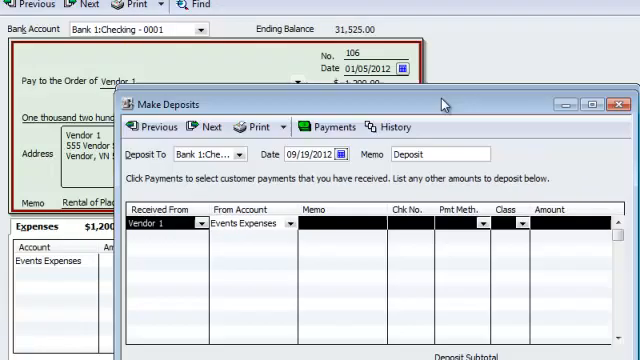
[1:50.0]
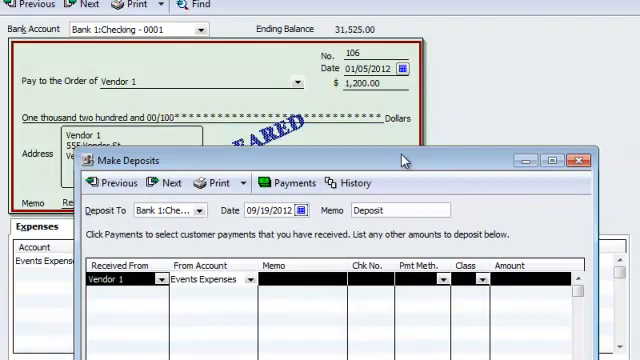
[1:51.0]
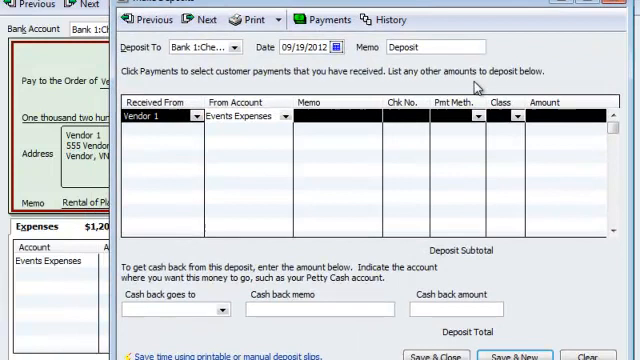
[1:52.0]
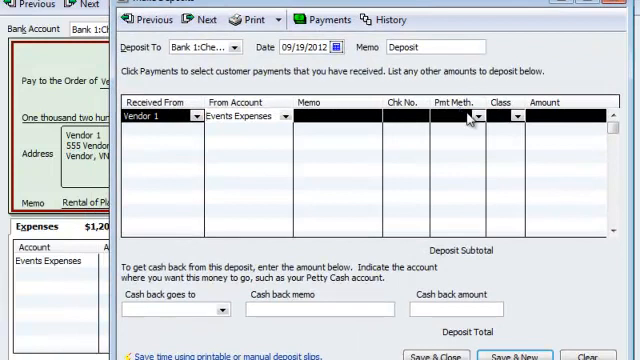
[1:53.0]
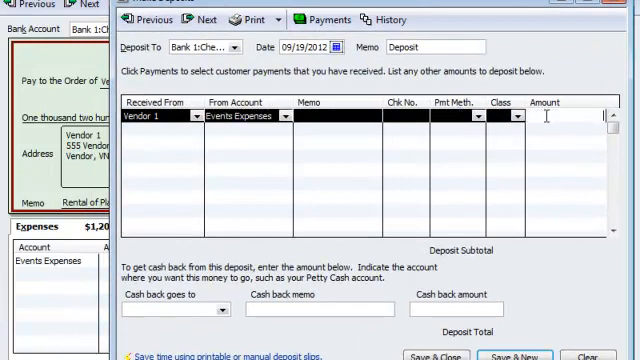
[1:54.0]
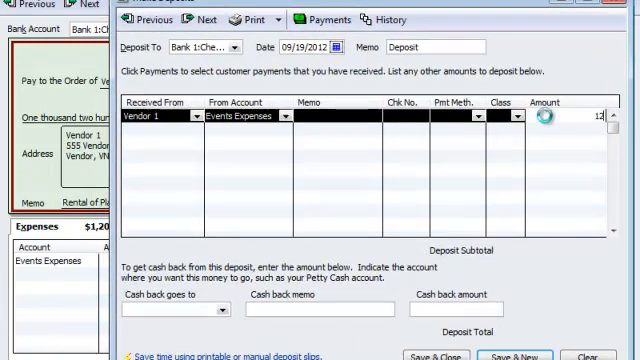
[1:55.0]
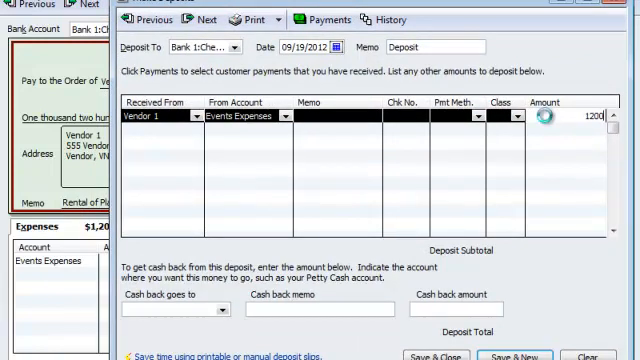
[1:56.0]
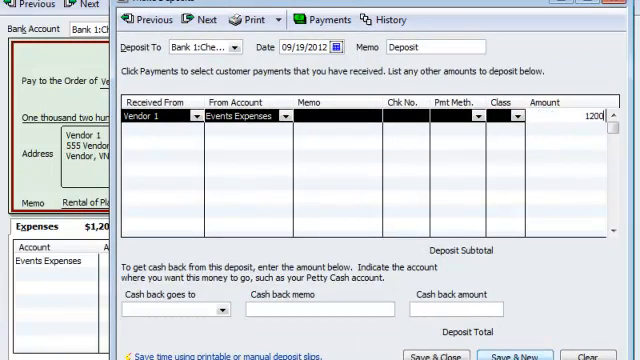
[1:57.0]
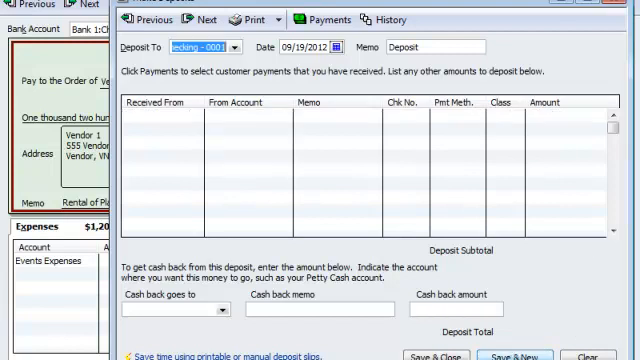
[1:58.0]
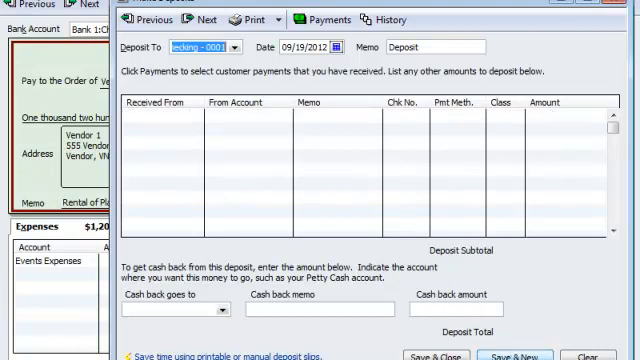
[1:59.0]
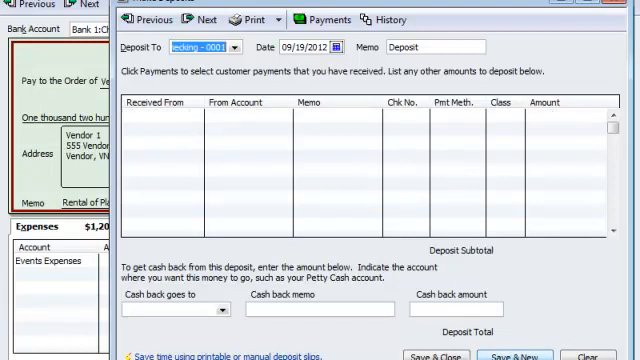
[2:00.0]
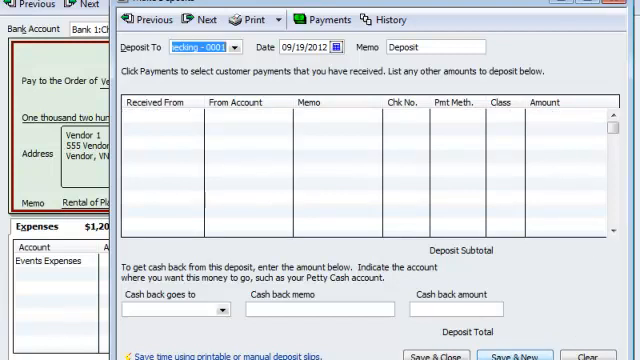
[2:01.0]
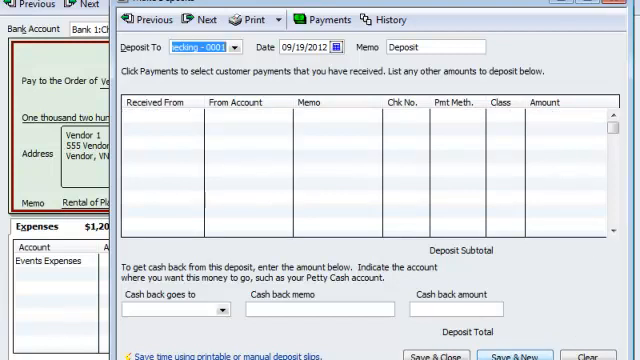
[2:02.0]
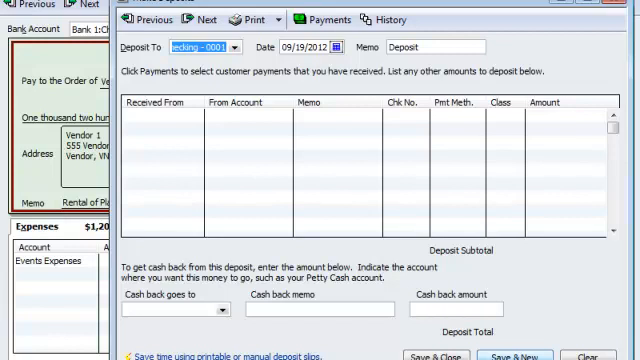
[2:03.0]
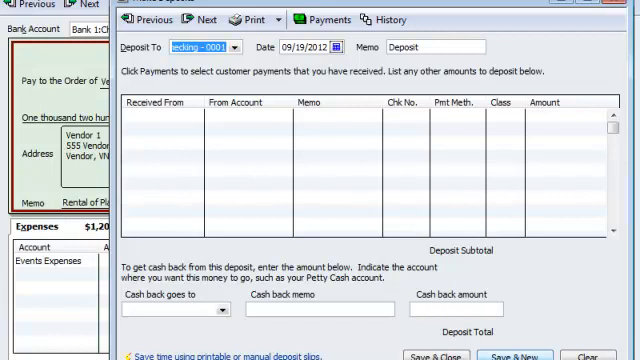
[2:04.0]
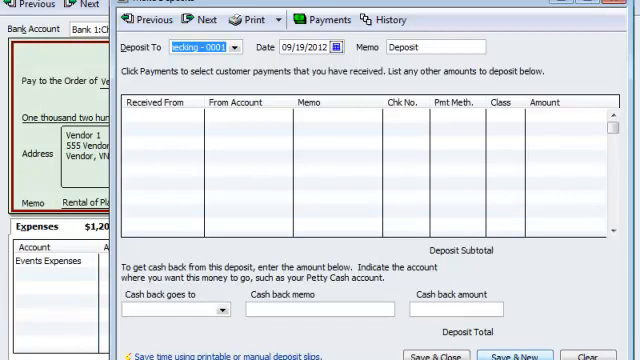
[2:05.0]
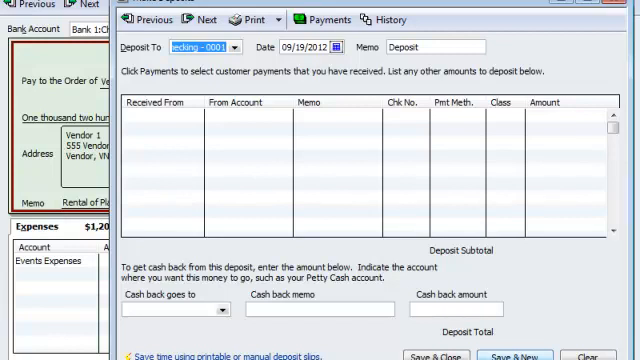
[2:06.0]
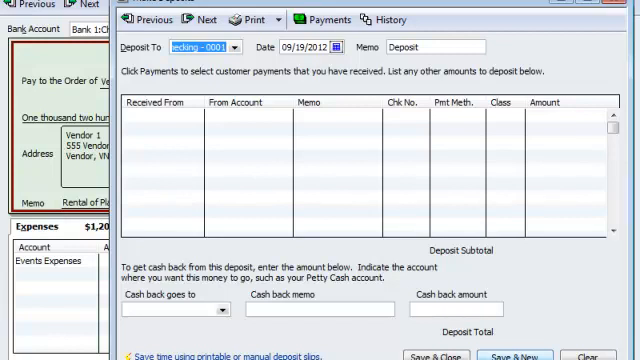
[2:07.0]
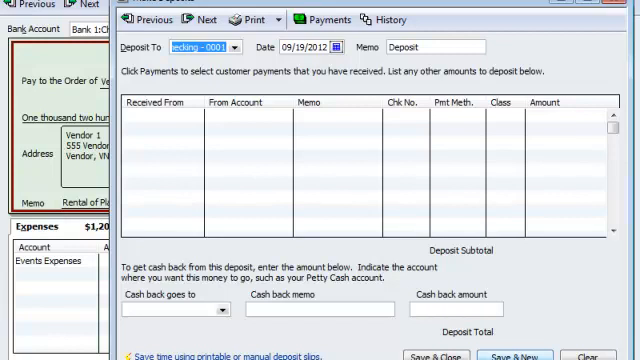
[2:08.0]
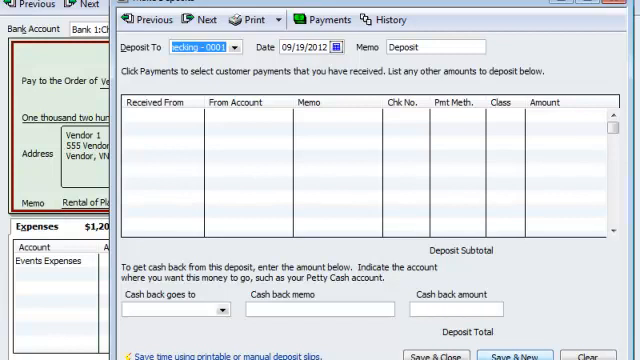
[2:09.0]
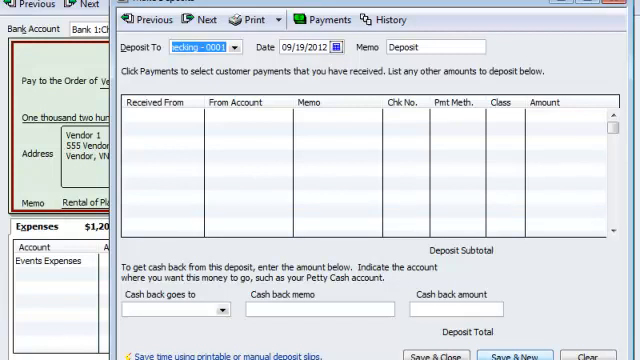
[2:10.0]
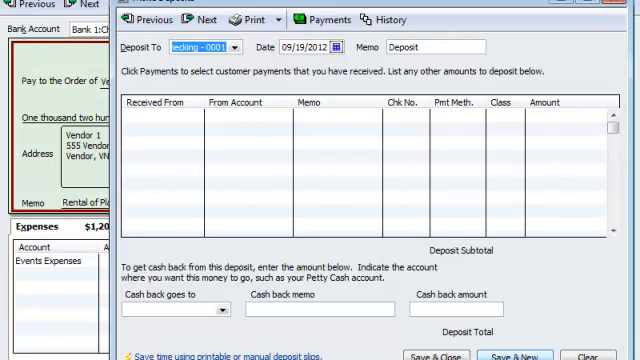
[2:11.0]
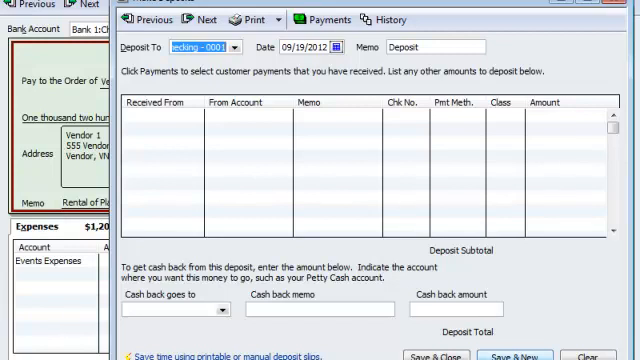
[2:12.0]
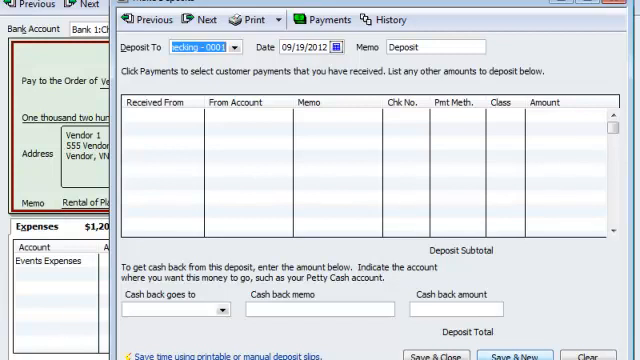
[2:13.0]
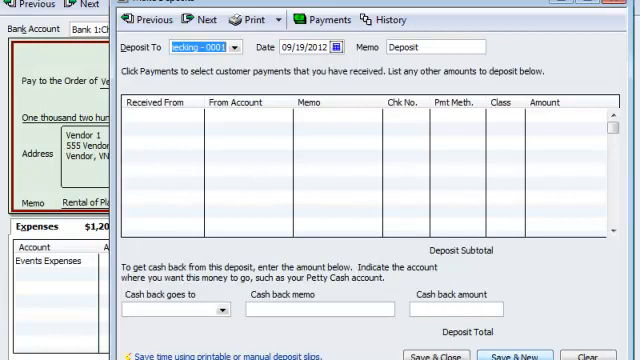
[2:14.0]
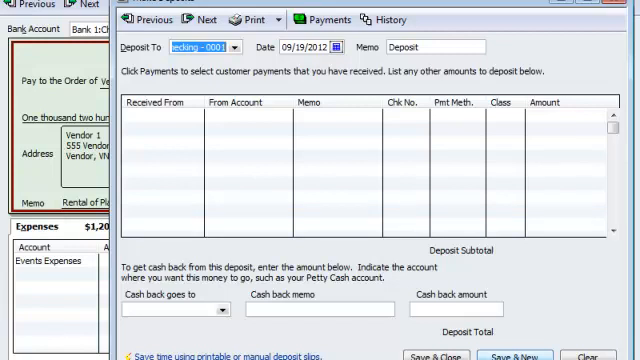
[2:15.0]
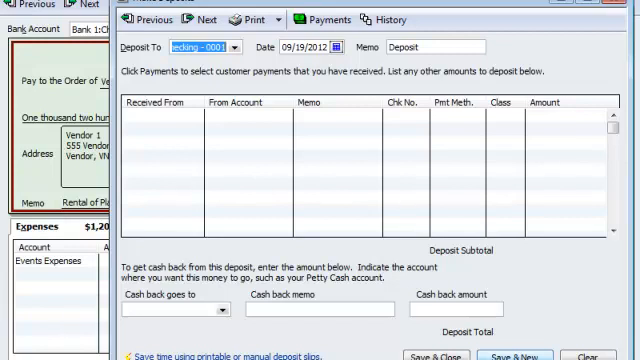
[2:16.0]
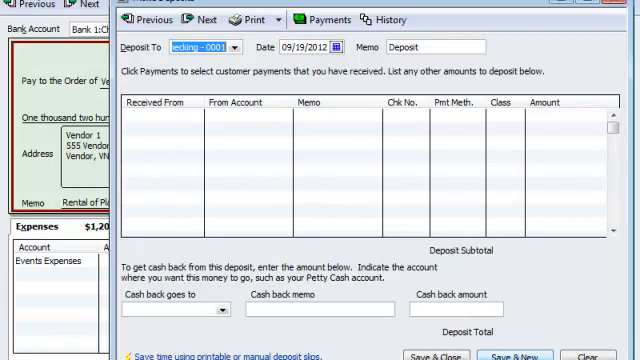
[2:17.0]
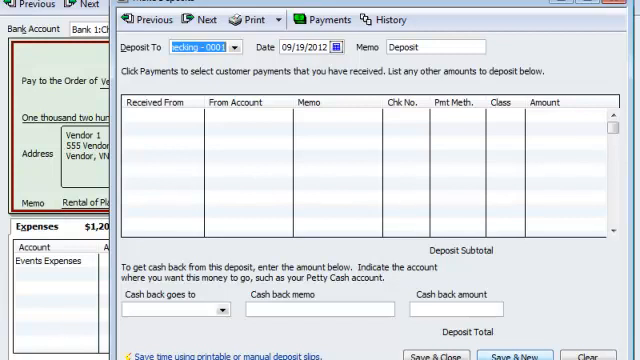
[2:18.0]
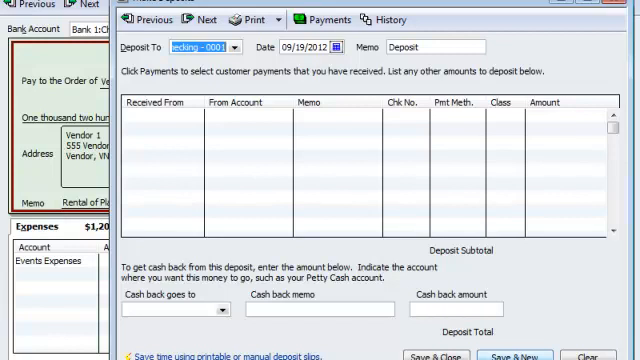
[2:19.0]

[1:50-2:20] The Make Deposits window is moved so the information behind it can be seen. The user types $1200 into the amount, and the amount appears. The user then clicks save and new, and all the entered information disappears so a new entry can be made. The result is $1200 received from Vendor 1, saved from the Event Expenses account.